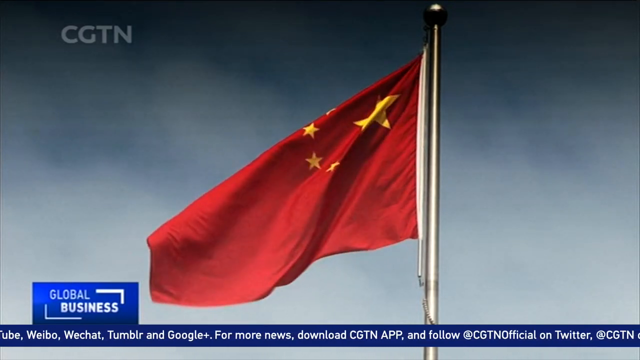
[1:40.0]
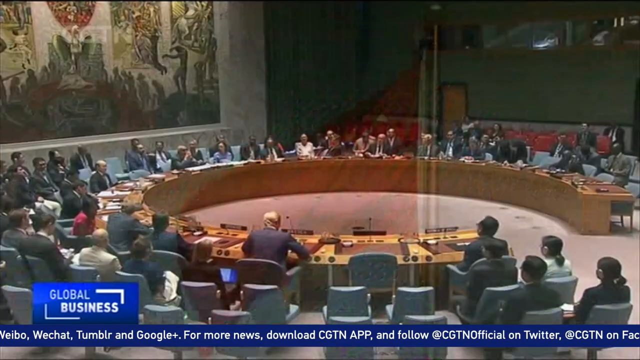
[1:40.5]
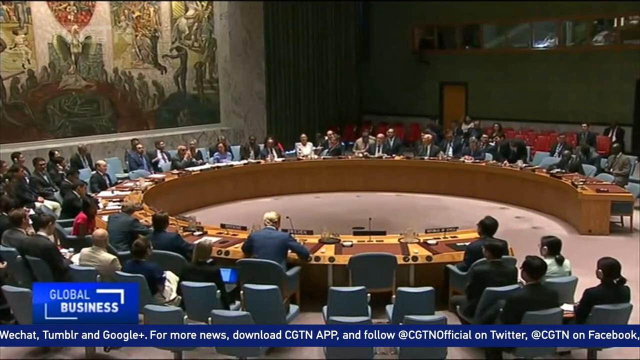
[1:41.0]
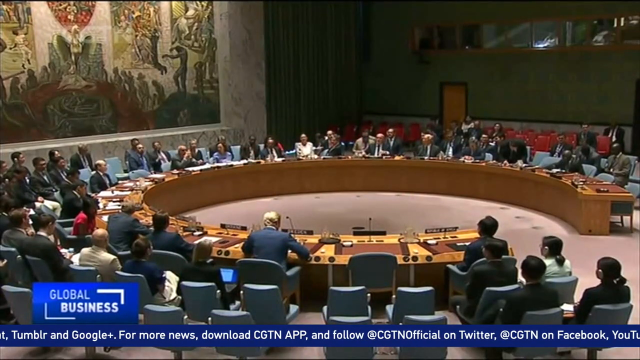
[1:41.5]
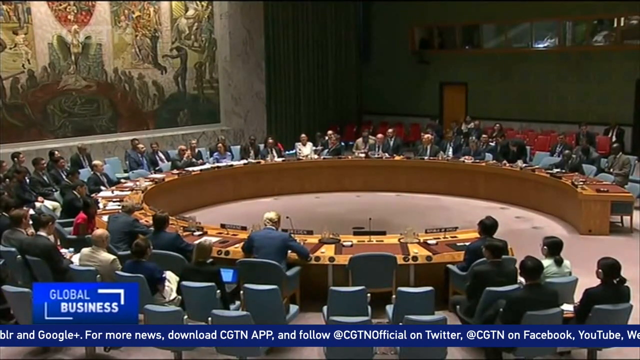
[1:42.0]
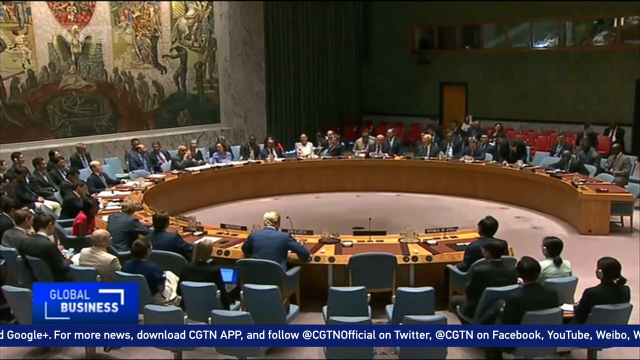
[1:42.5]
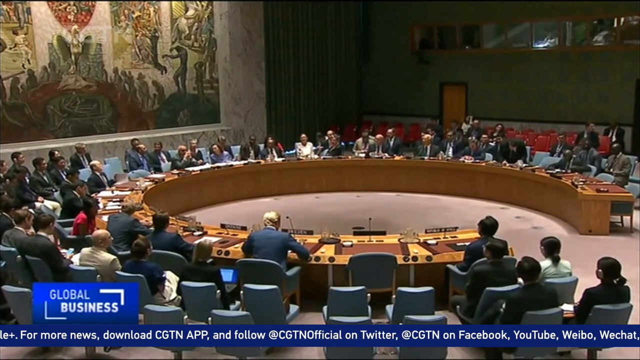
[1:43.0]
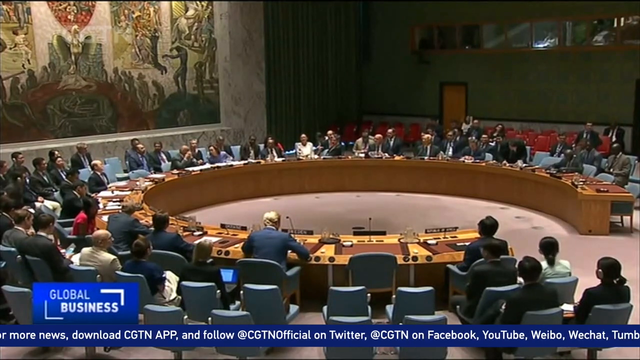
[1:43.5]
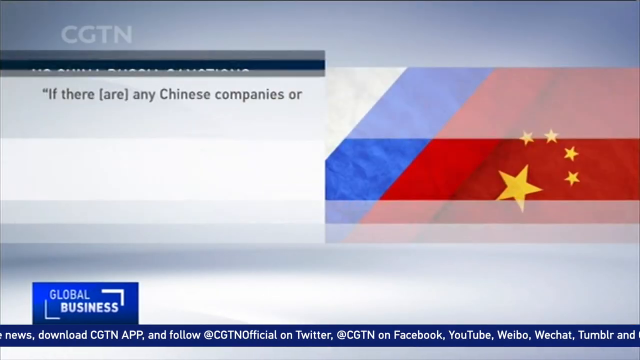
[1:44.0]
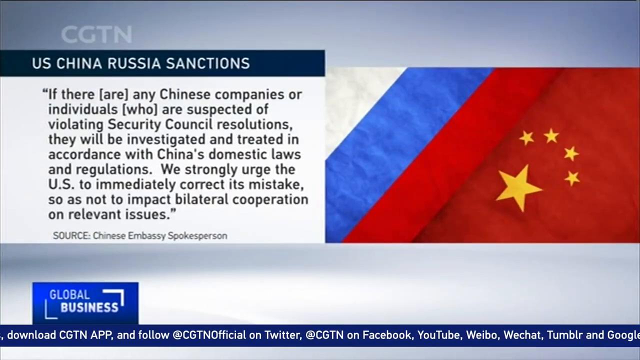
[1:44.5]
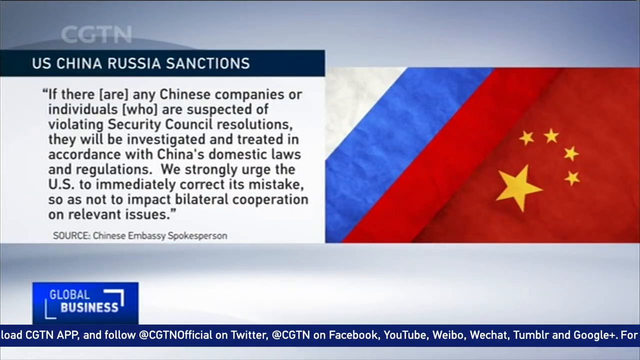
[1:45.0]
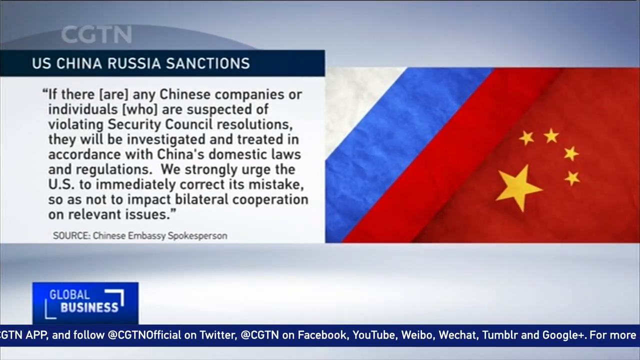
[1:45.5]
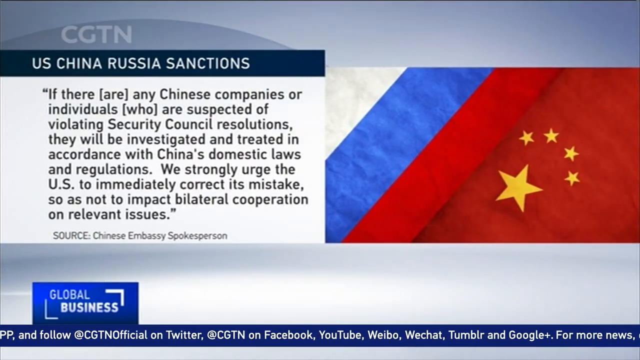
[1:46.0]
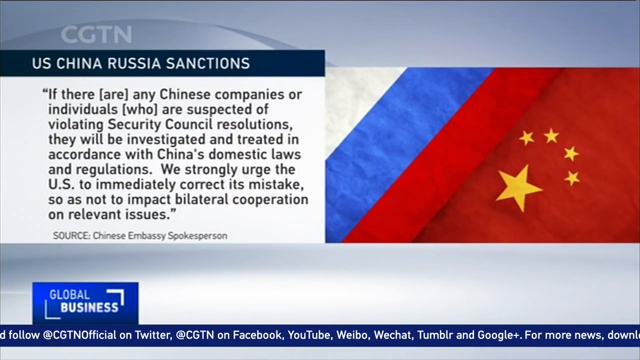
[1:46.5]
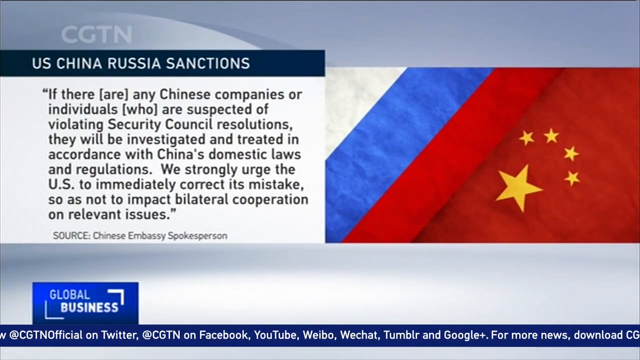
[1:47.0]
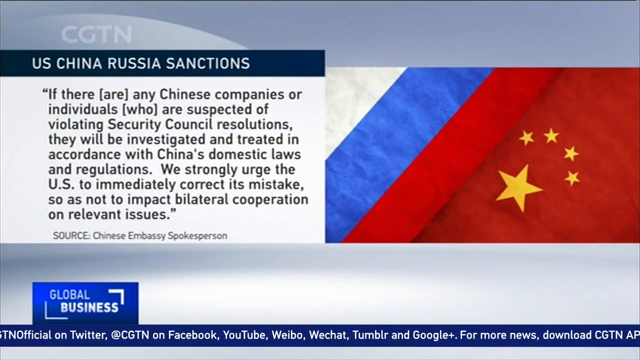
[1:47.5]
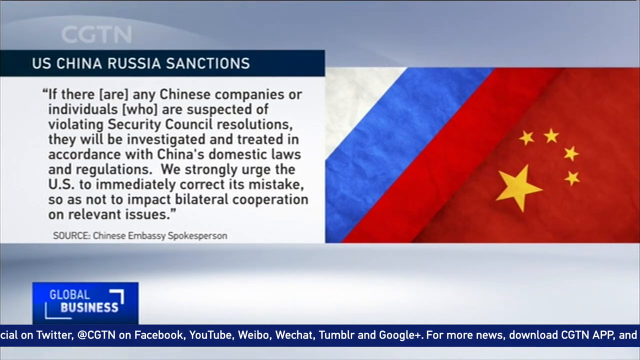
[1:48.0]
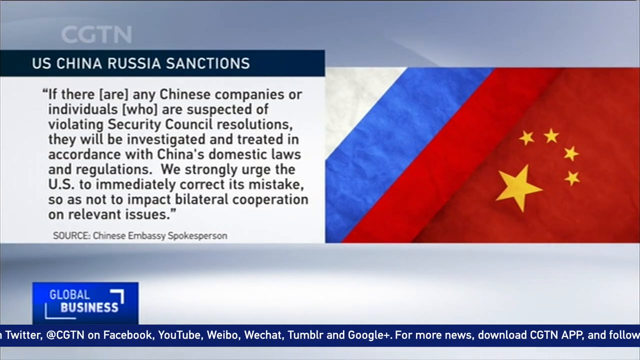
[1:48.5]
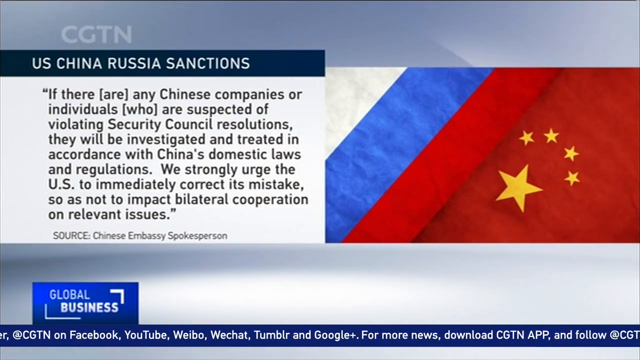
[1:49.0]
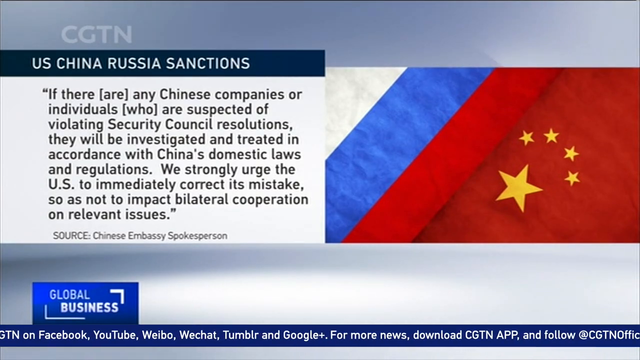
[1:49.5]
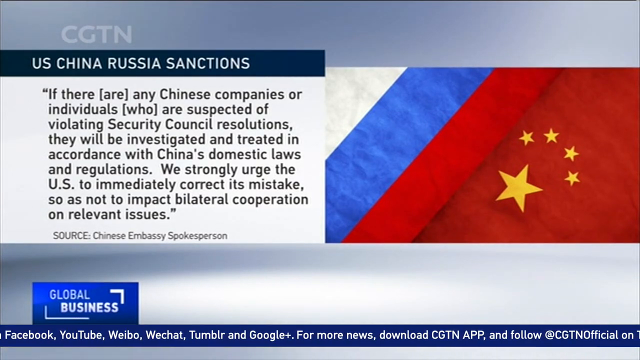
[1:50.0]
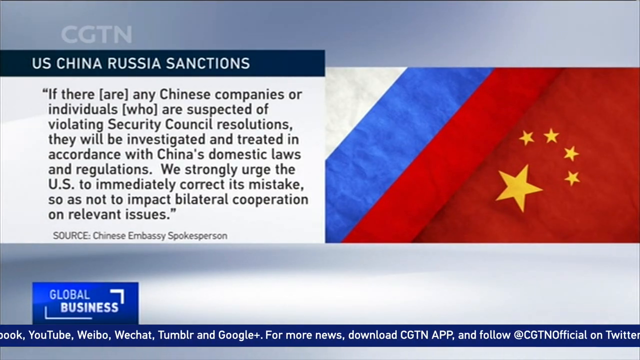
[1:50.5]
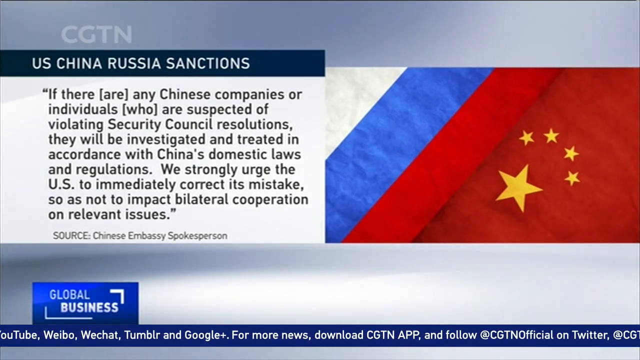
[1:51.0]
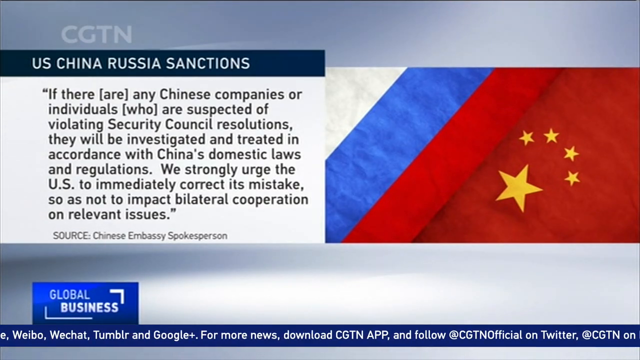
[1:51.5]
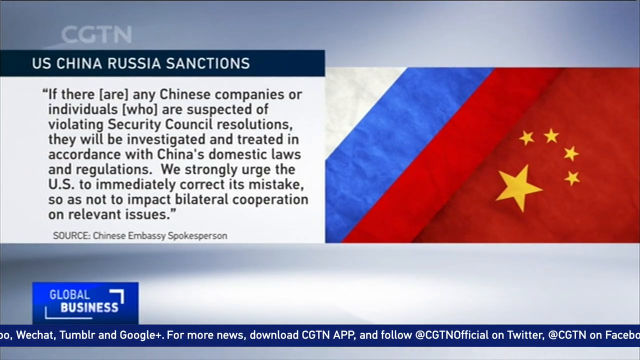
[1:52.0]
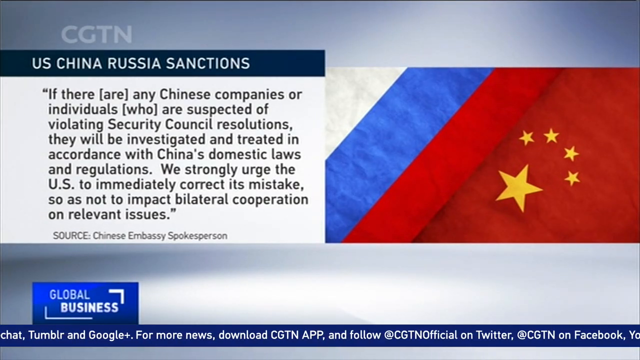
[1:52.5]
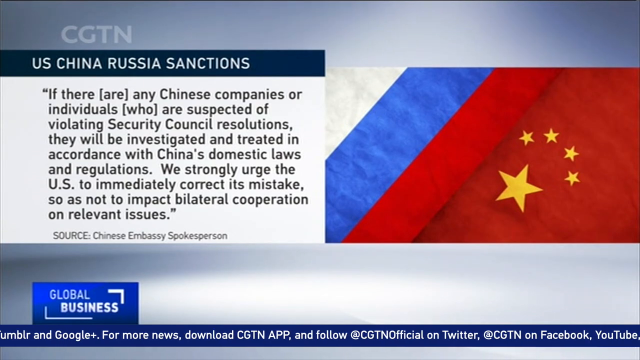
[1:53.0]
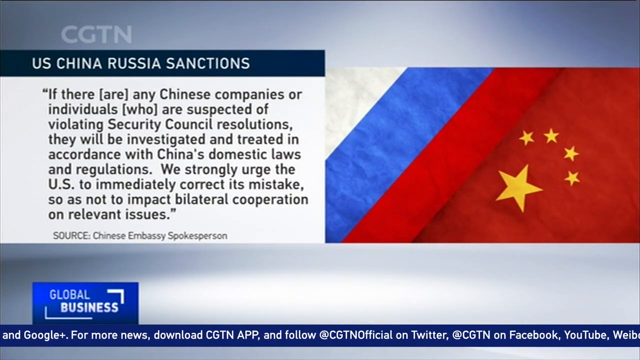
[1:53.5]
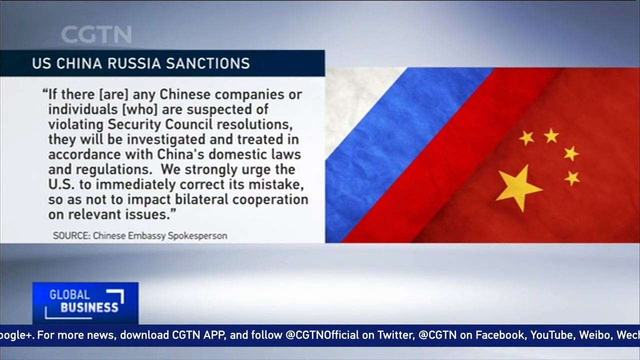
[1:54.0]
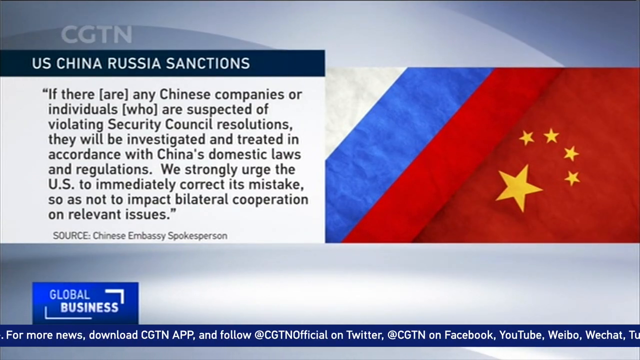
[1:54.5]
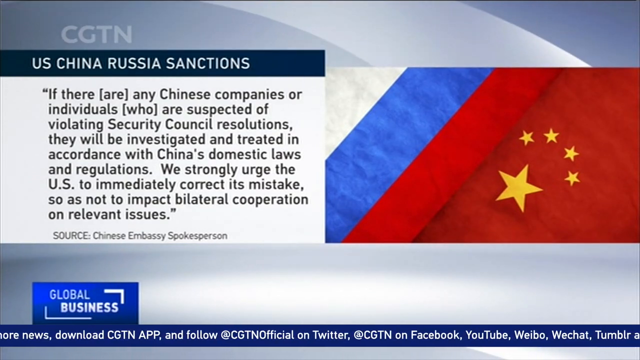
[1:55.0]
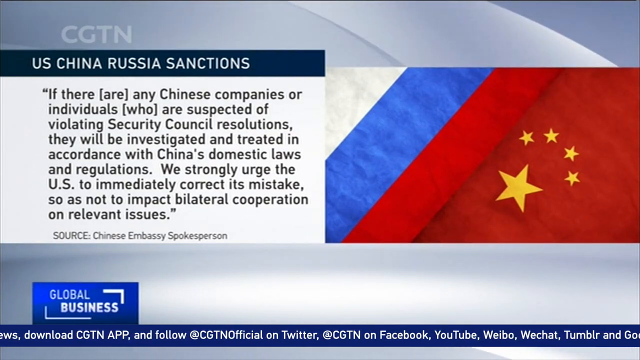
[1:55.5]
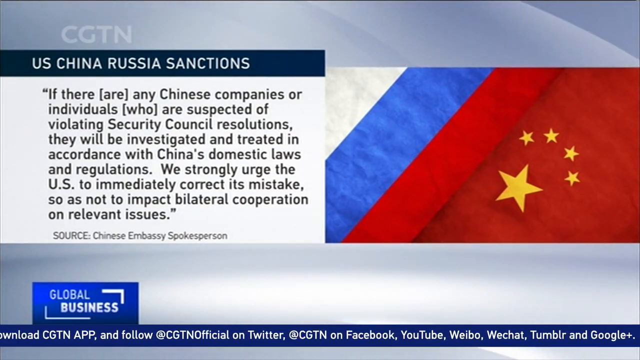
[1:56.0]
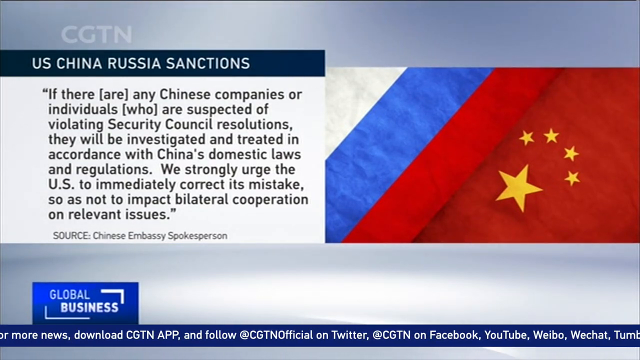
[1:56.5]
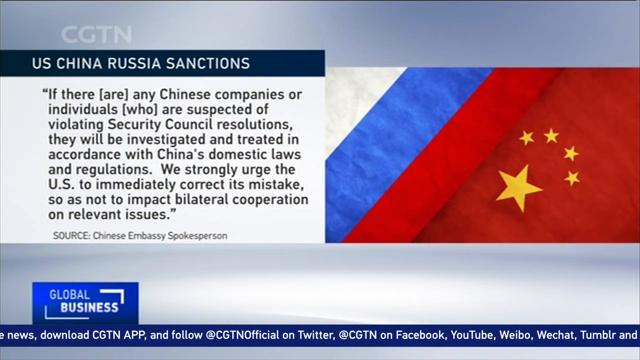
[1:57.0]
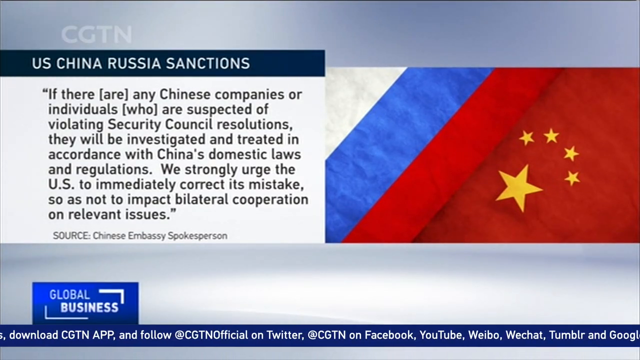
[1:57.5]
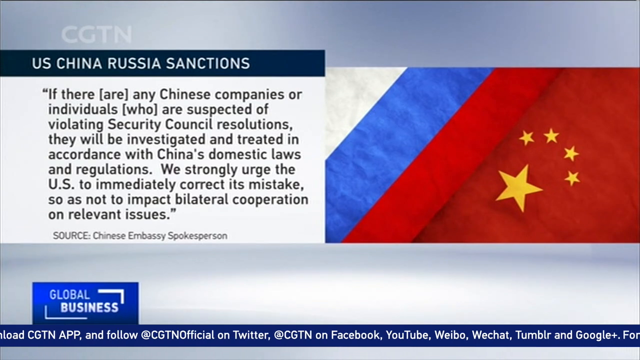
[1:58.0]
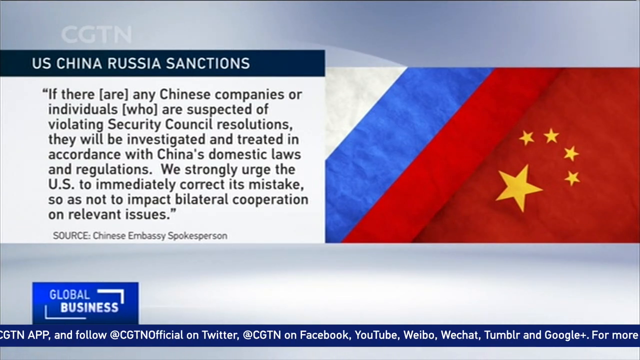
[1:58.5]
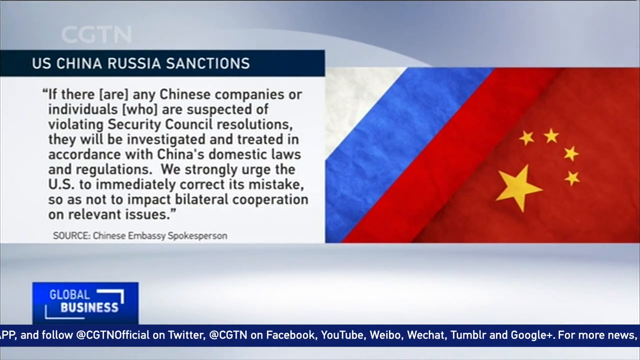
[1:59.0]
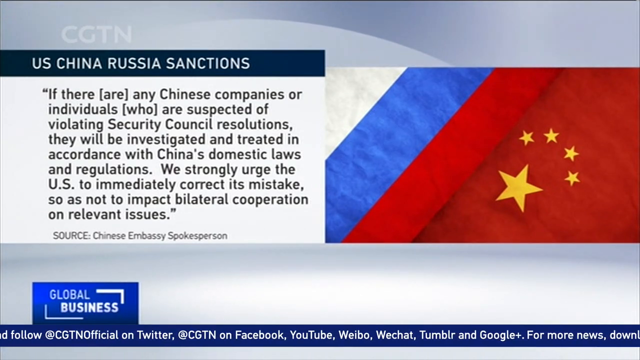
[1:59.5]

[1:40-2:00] A large room with several individuals sitting around is shown. The camera then cuts to an image of the Chinese flag with text reading "US, China, Russia sanctions" and the statement: "If there are any Chinese companies or individuals who are suspected of violating Security Council resolutions, they will be investigated and treated in accordance with Chinese domestic laws and regulations. We strongly urge the United States to immediately correct its mistake so as not to impact bilateral cooperation on relevant issues." The source is given as the Chinese embassy spokesperson, and "Global Business" appears in the lower left-hand corner. A room of individuals sitting around discussing is shown, and the sanctions quote from the Chinese embassy spokesperson appears with an image of the Chinese flag to the right of the quote and "global business" in the lower left-hand corner.